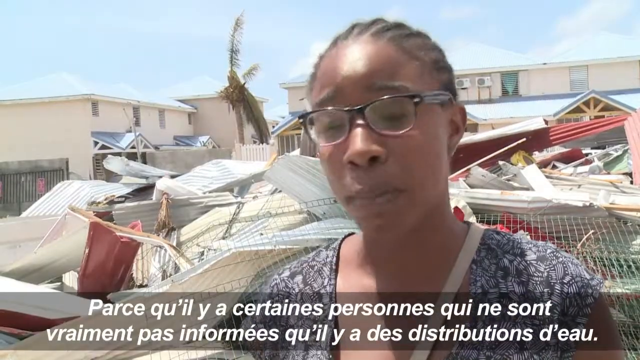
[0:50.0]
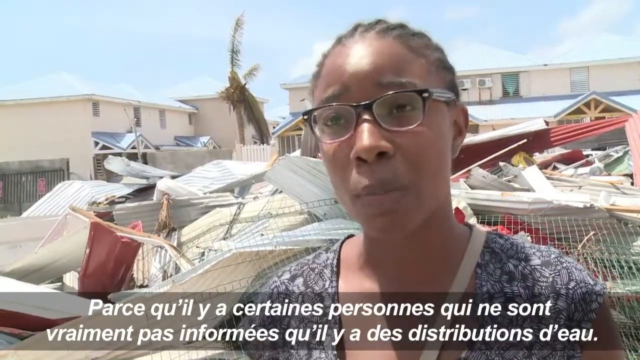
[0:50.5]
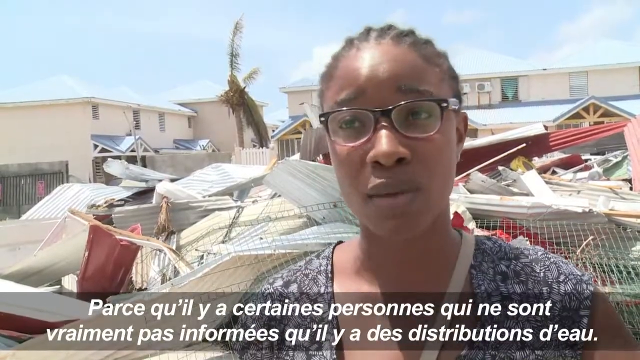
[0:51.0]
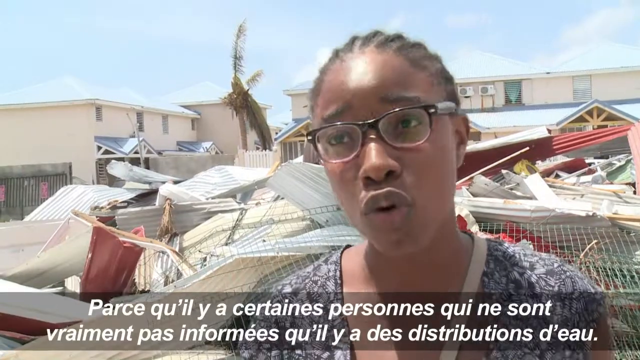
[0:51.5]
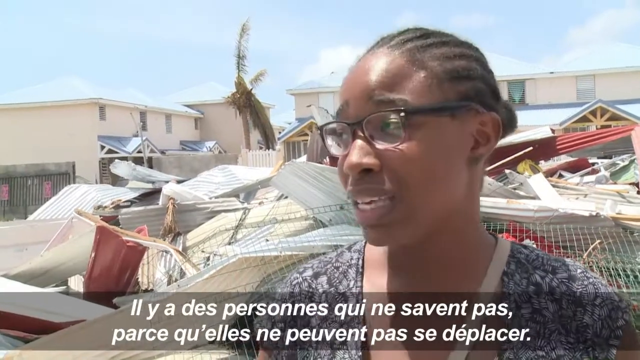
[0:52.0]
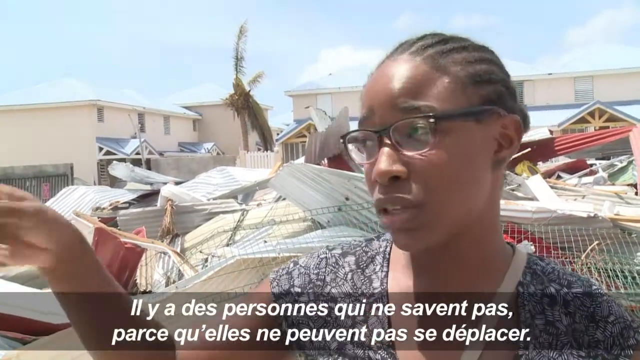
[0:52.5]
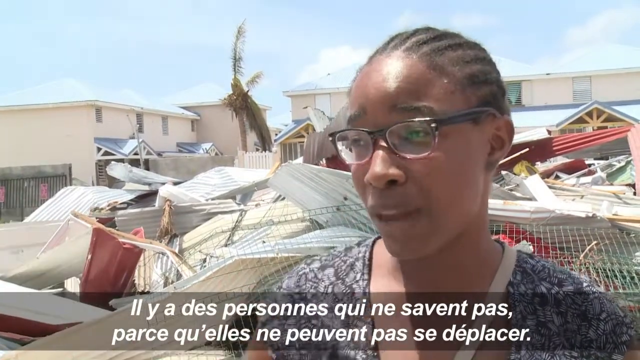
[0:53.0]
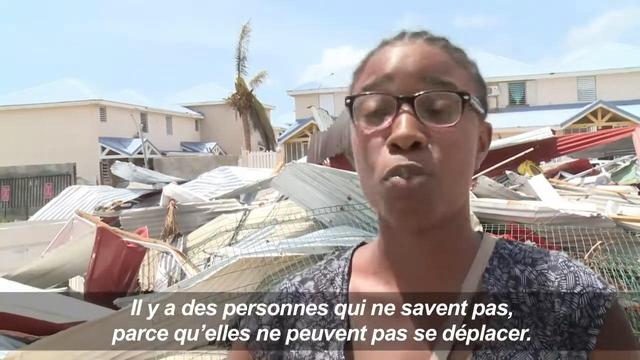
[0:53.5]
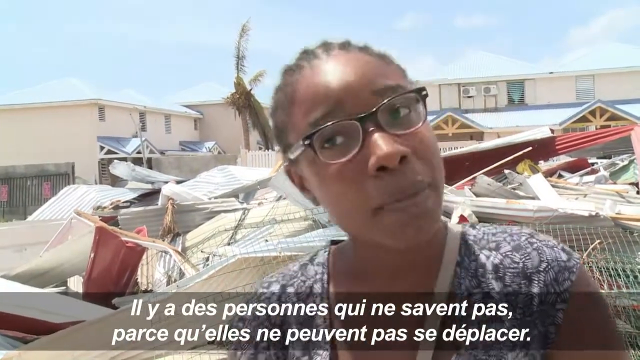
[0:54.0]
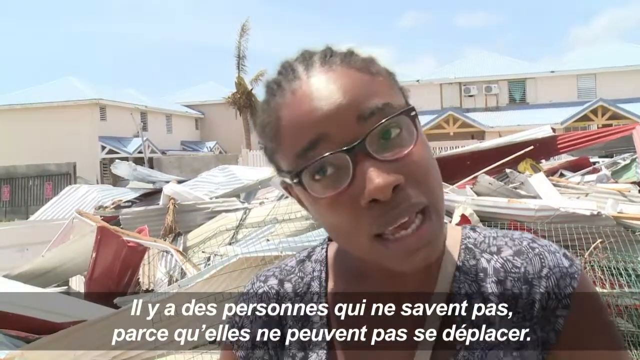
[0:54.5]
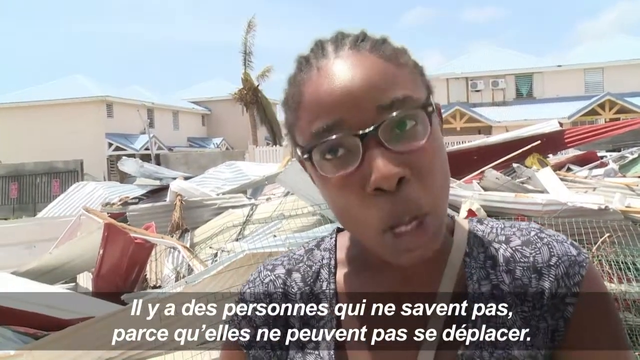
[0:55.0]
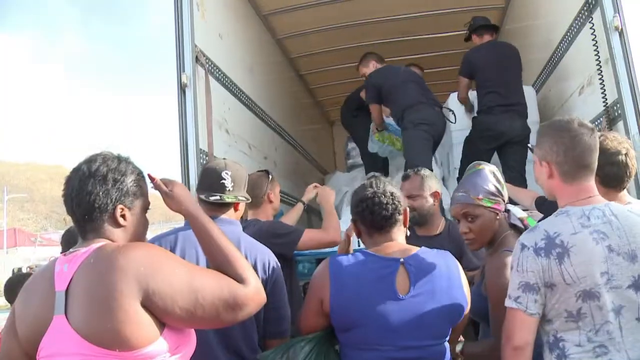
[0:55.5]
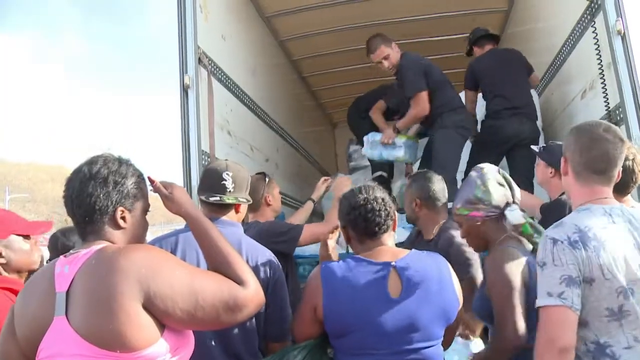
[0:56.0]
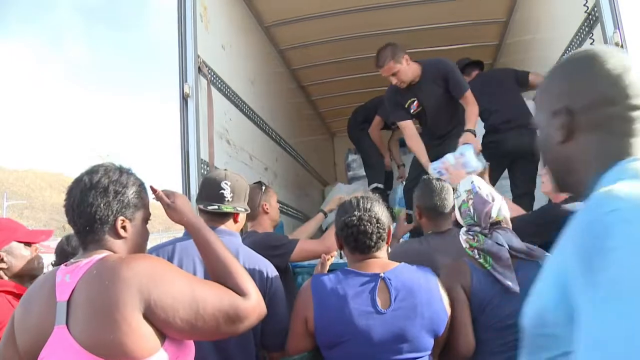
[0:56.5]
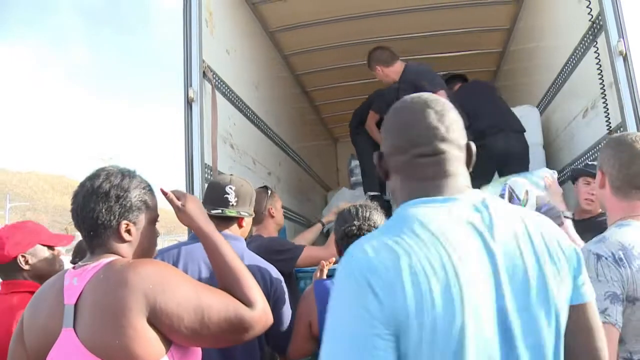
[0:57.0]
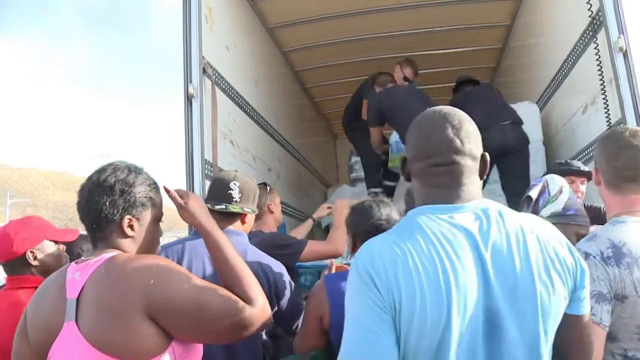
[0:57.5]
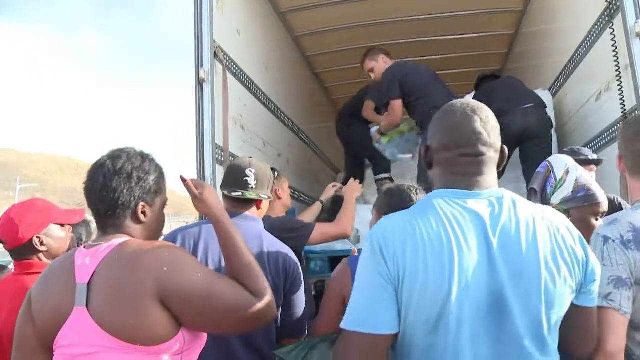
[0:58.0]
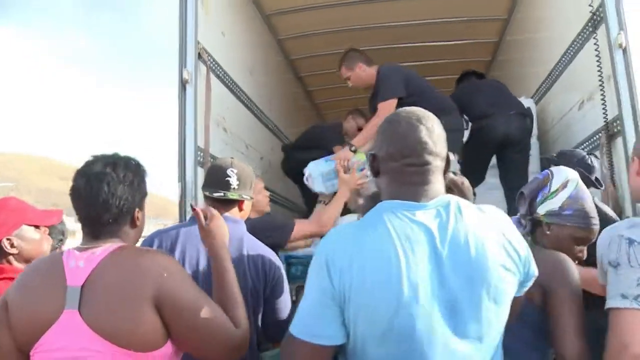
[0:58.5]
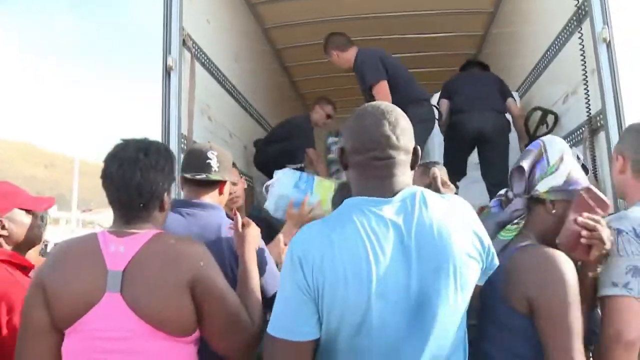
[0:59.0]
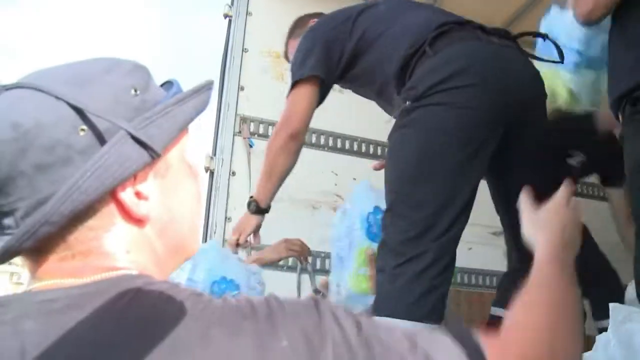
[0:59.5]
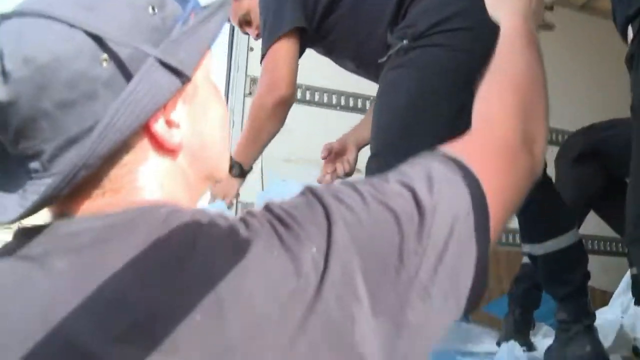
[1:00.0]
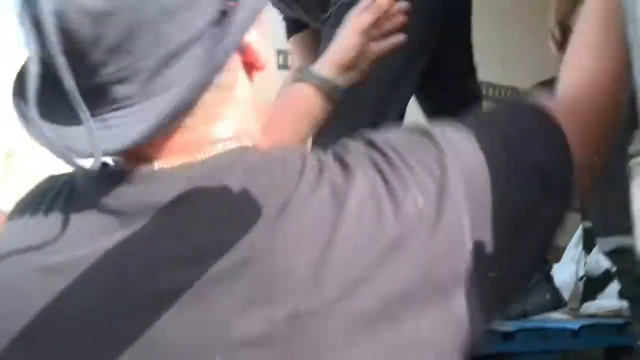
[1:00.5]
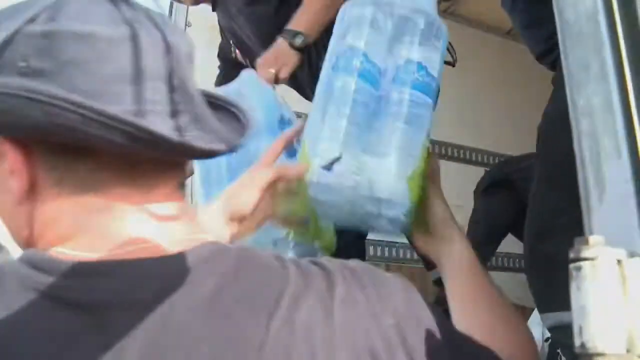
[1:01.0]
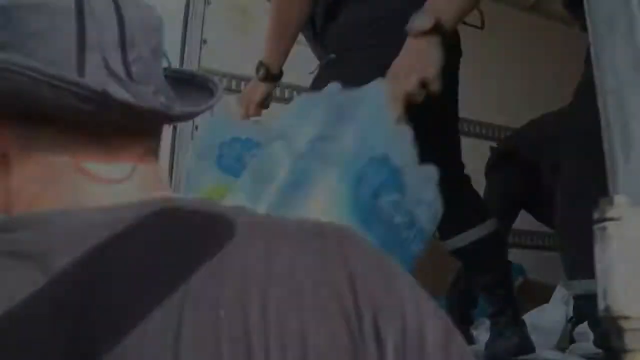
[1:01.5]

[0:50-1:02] The video revisits earlier scenes. The African woman in front of the demolished house continues to speak very calmly, though her demeanor suggests she is very distraught about the surrounding devastation. The truck where water is being handed out is shown again, and it seems more people continue to arrive to seek aid. The water bottles come in packs of six and are approximately a foot tall. Three individuals are retrieving water from the truck and relaying it to two workers on the ground, who hand it out to the crowd behind them.